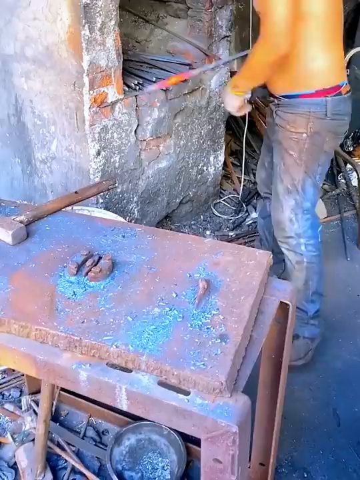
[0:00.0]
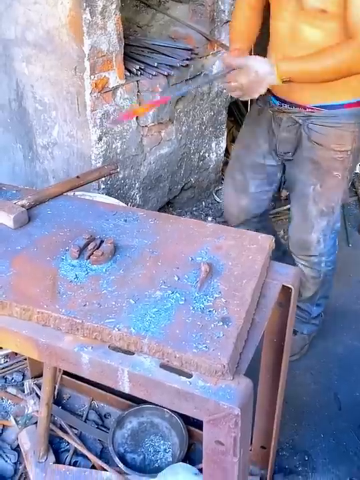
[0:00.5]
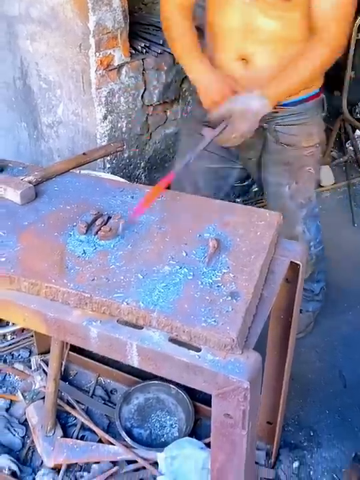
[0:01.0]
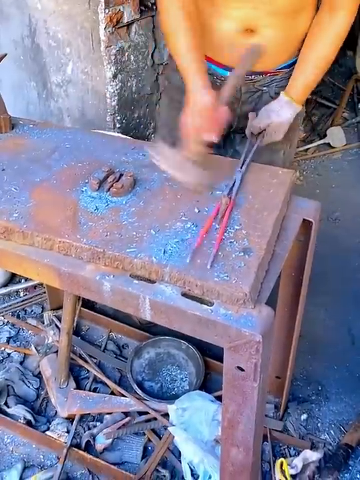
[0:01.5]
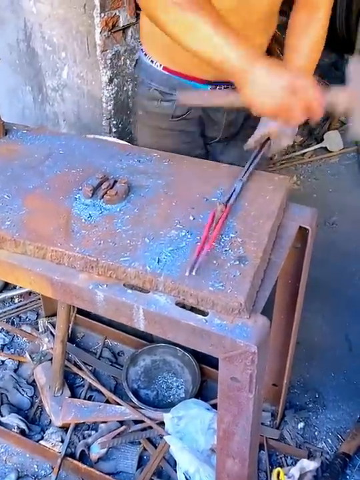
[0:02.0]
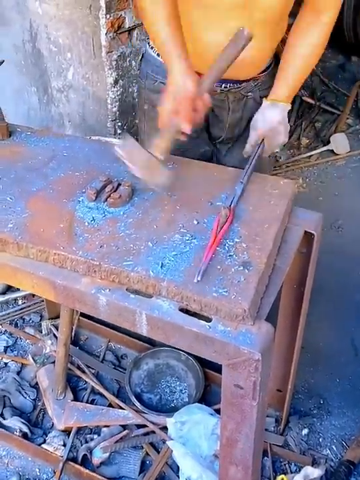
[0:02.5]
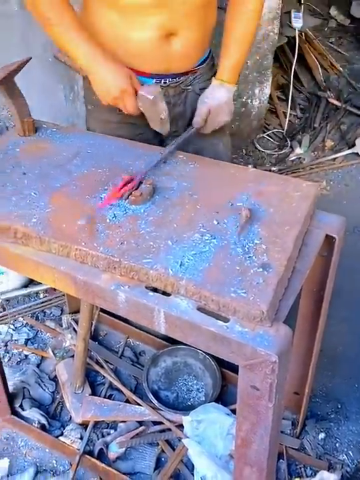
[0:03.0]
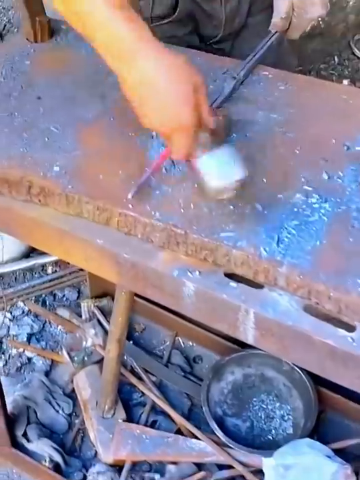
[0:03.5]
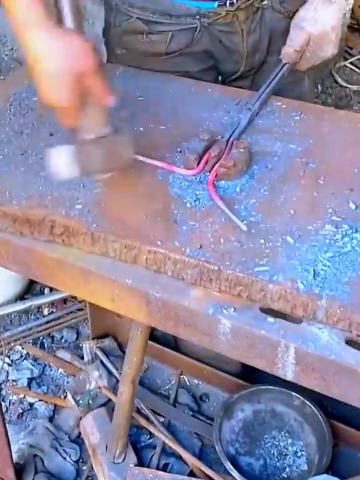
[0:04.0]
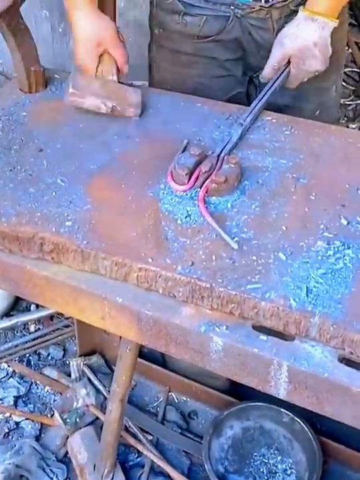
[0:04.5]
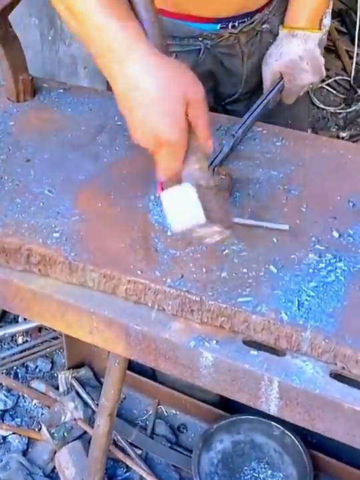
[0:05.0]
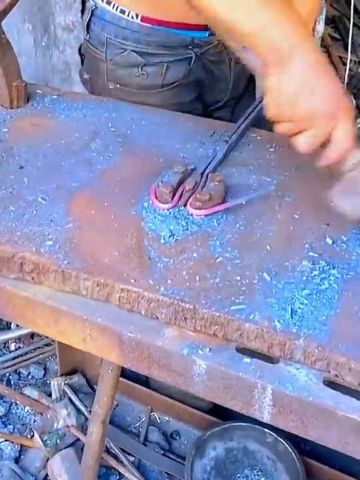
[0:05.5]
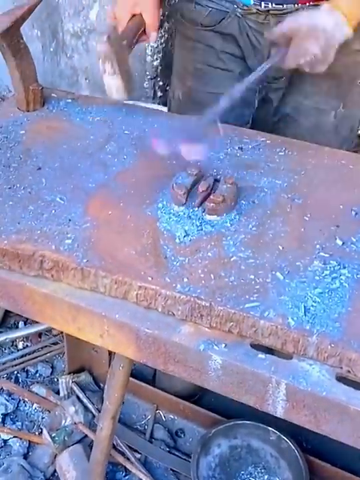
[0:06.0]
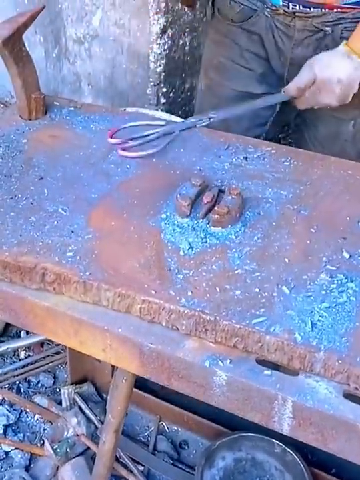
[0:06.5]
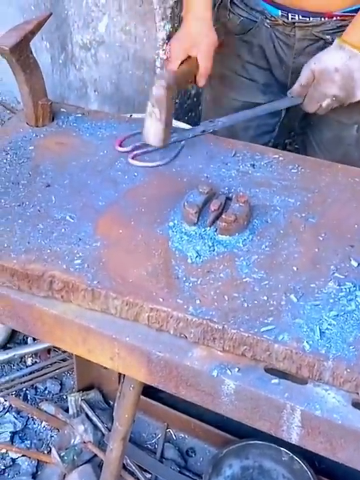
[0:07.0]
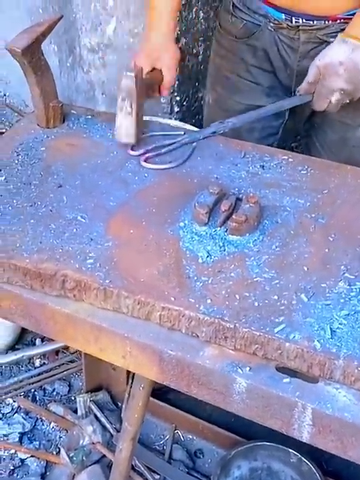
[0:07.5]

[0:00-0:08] A shirtless man works at a big metal table, but only part of him is visible, from roughly the belly button down, along with his arms; he has a bit of a belly. He has a metal mallet and pliers. The metal table he works on is very hot. He has two rods and taps them with the mallet, molding them into what looks like the shape of scissor handles. The rods are bright orange and hot so that he can shape them.